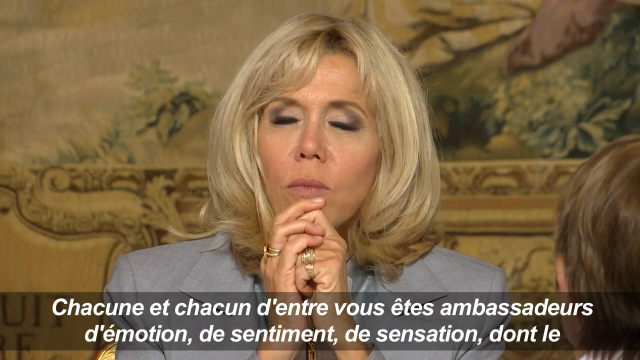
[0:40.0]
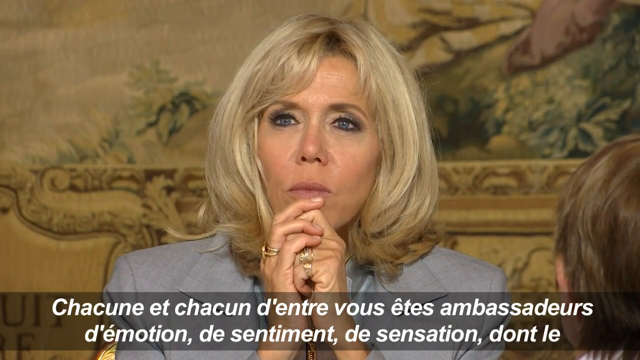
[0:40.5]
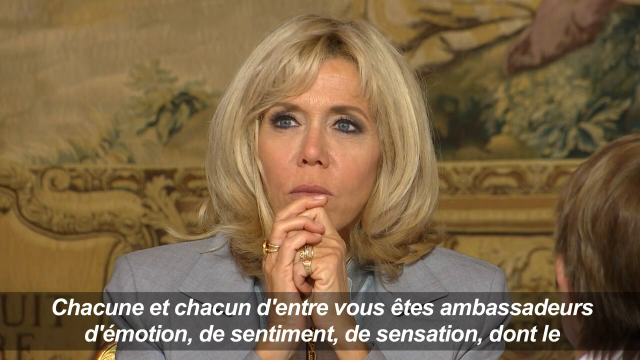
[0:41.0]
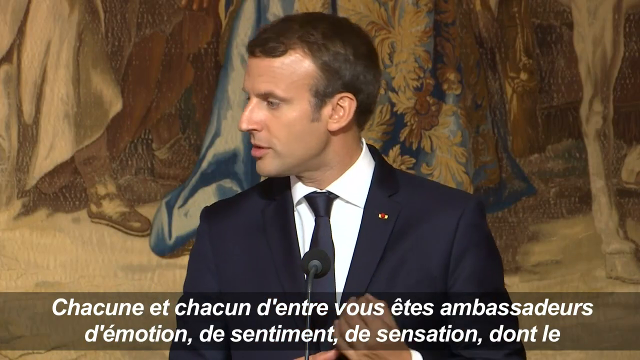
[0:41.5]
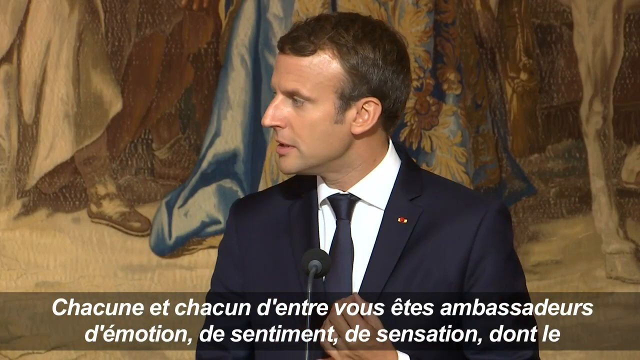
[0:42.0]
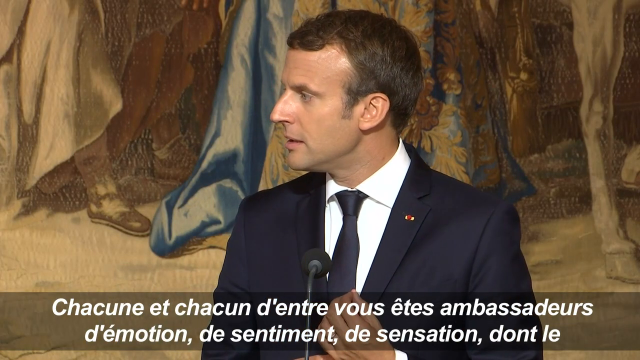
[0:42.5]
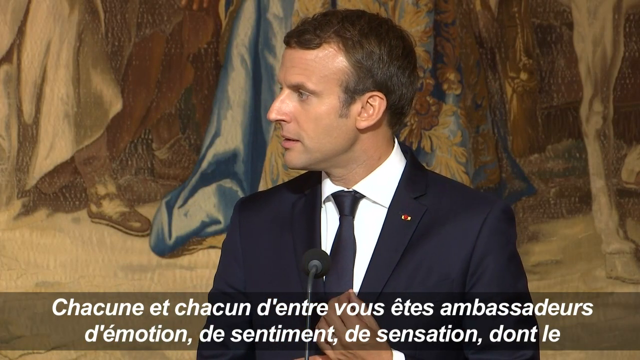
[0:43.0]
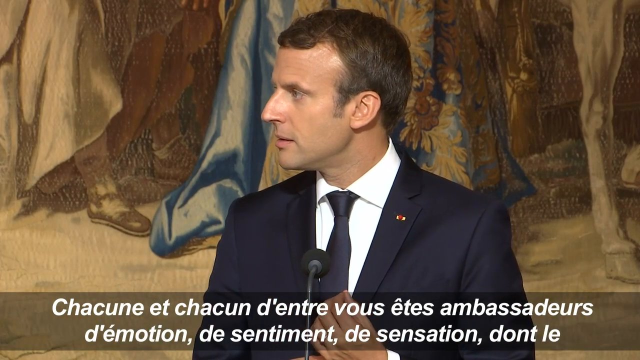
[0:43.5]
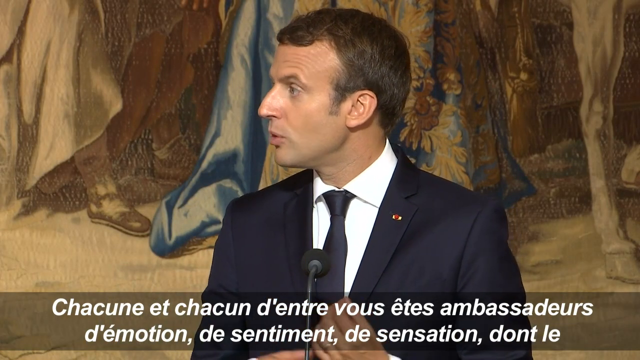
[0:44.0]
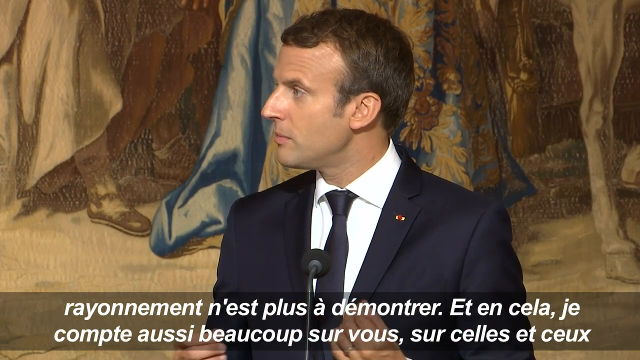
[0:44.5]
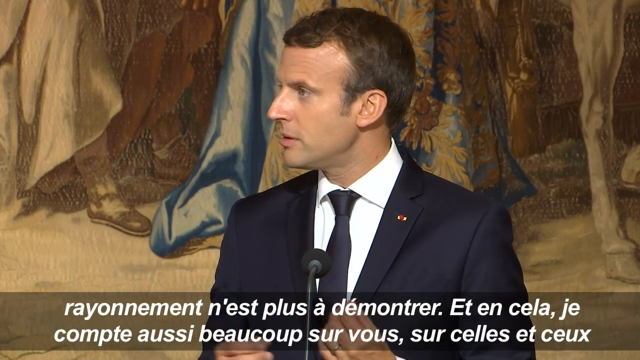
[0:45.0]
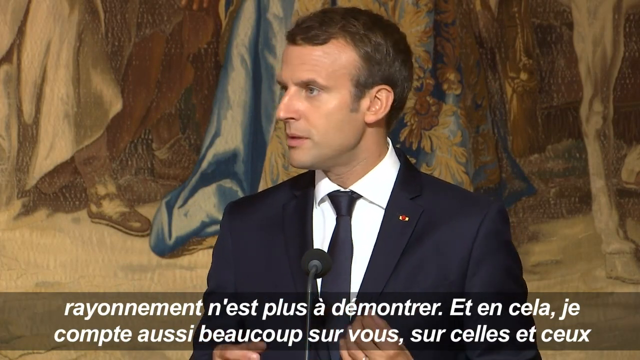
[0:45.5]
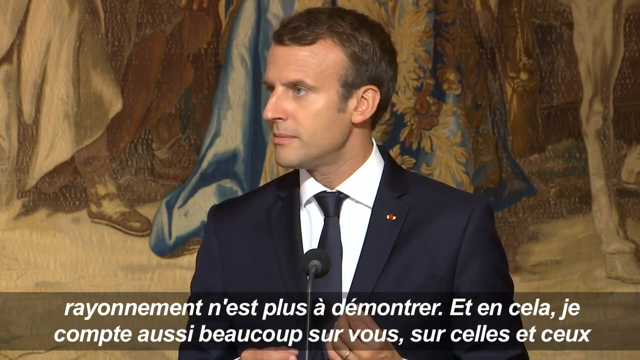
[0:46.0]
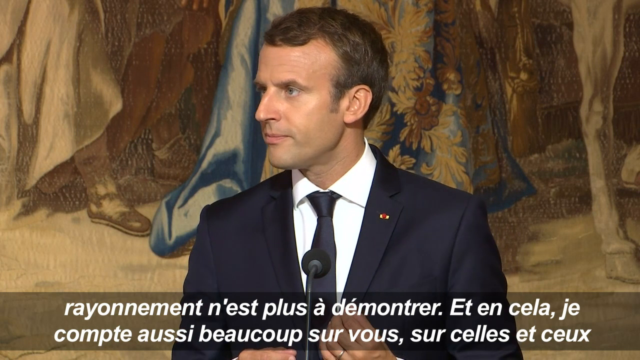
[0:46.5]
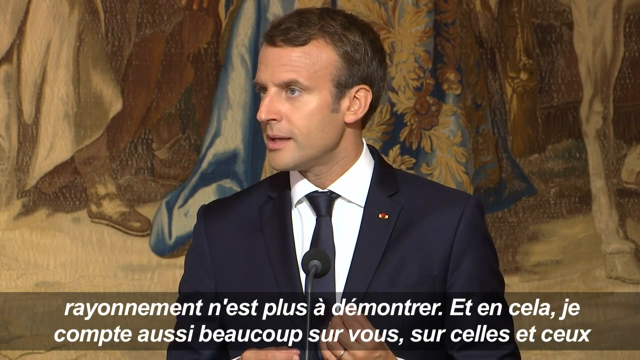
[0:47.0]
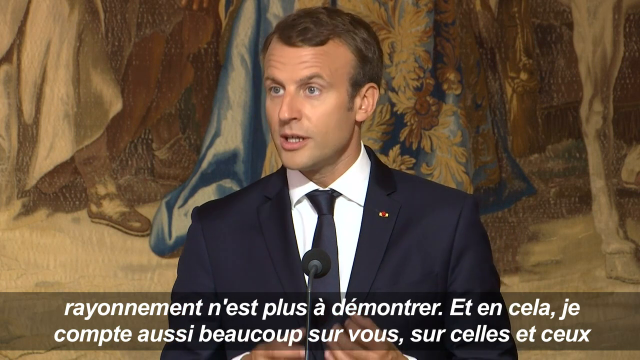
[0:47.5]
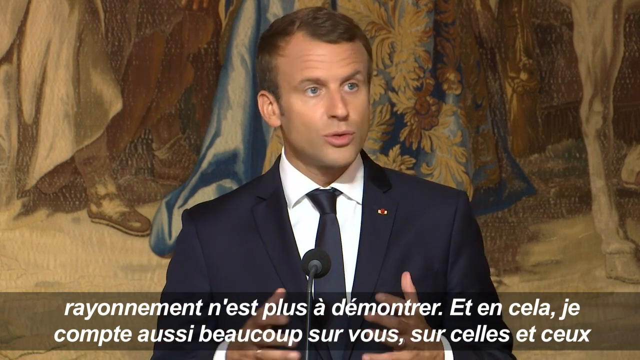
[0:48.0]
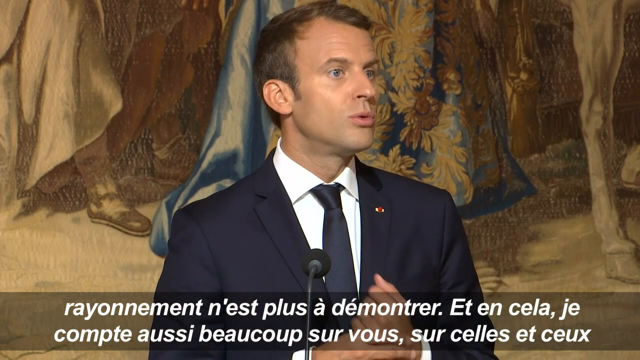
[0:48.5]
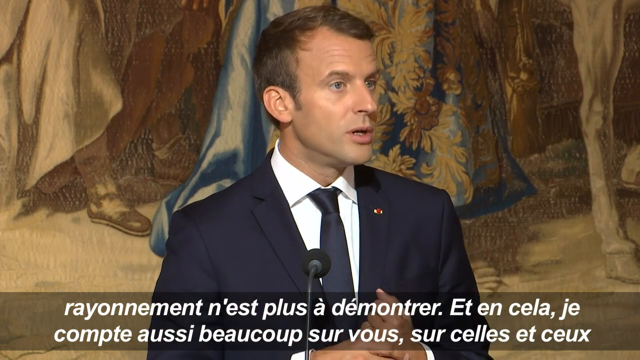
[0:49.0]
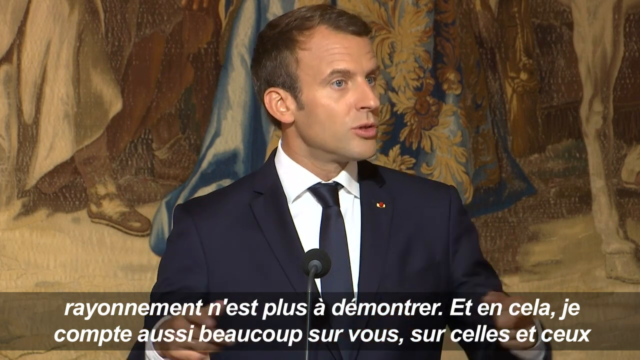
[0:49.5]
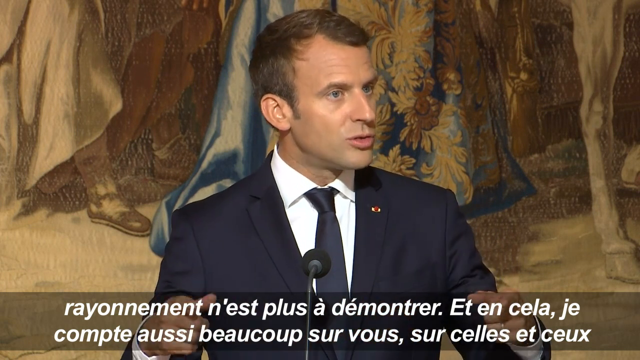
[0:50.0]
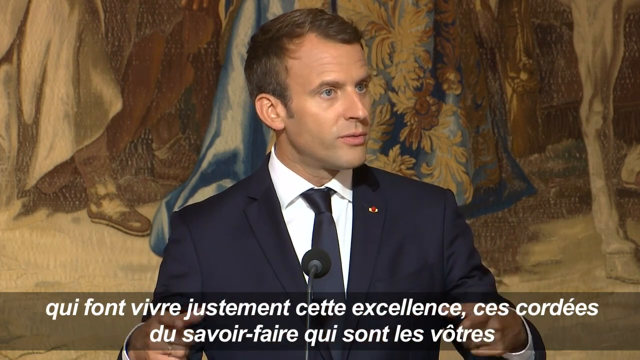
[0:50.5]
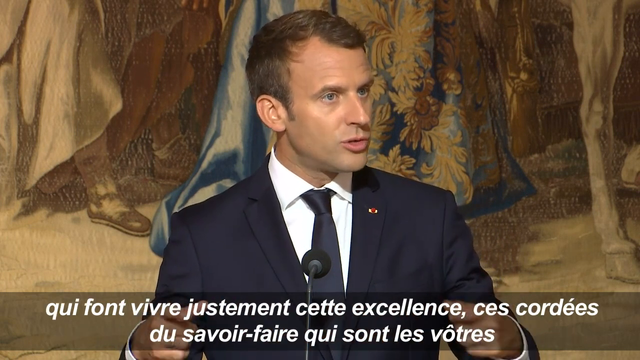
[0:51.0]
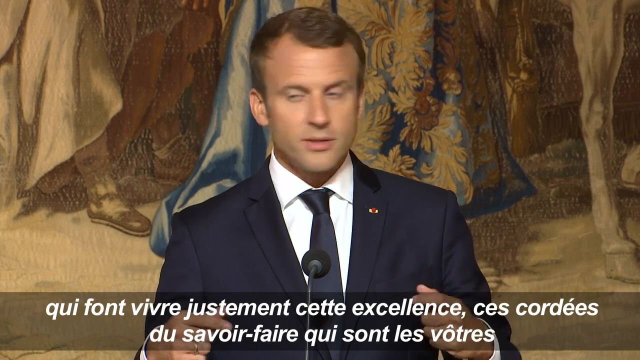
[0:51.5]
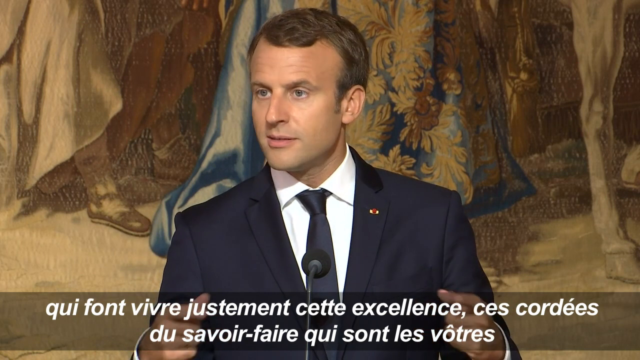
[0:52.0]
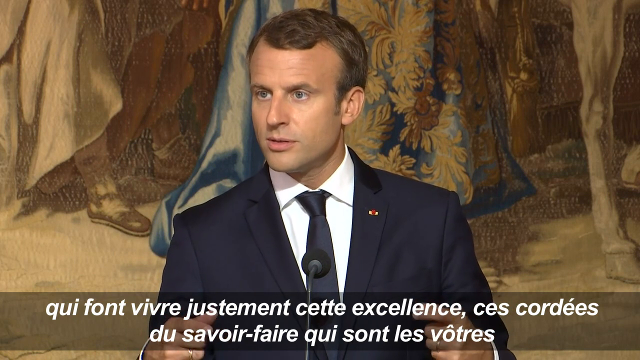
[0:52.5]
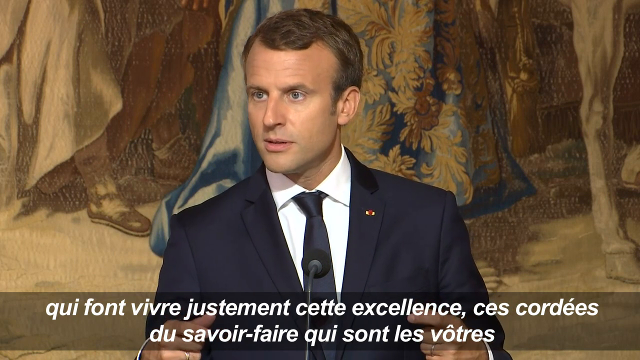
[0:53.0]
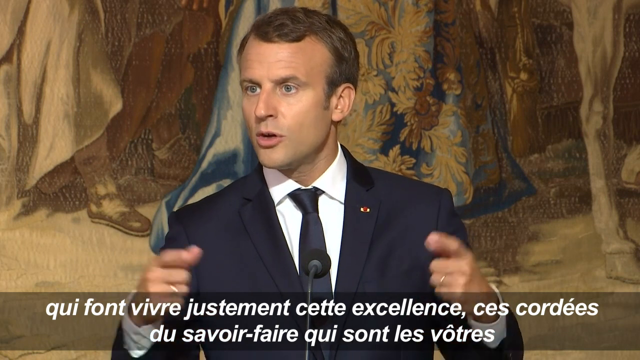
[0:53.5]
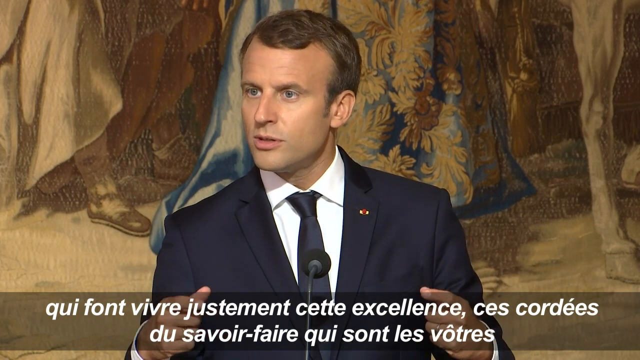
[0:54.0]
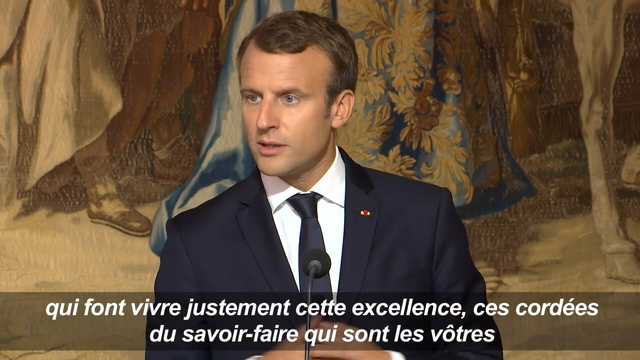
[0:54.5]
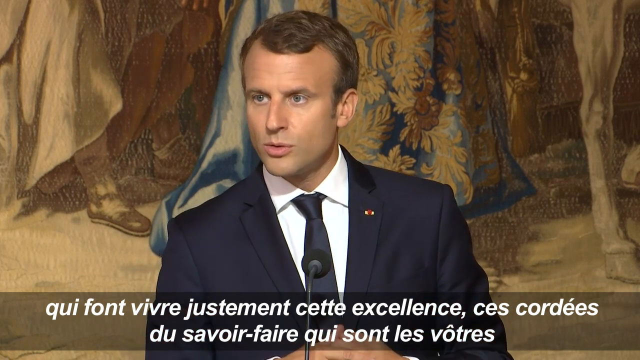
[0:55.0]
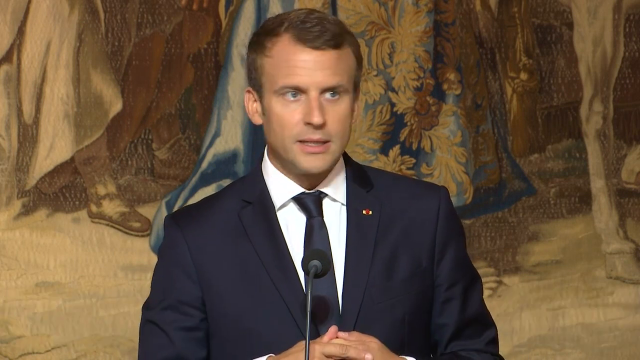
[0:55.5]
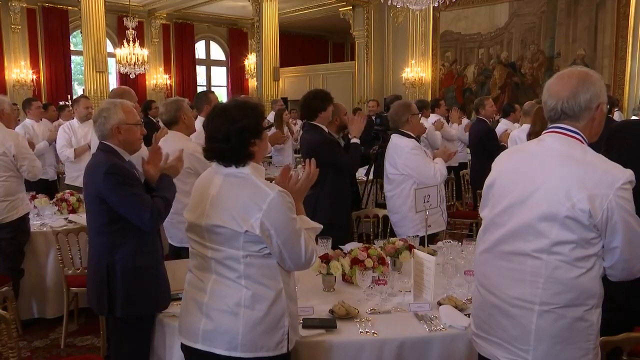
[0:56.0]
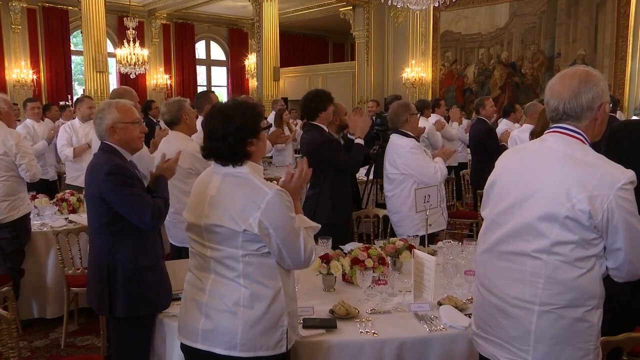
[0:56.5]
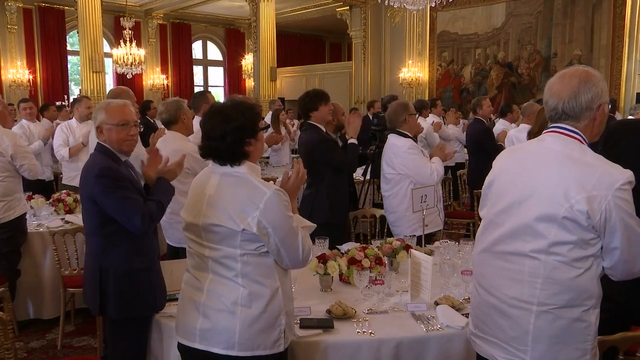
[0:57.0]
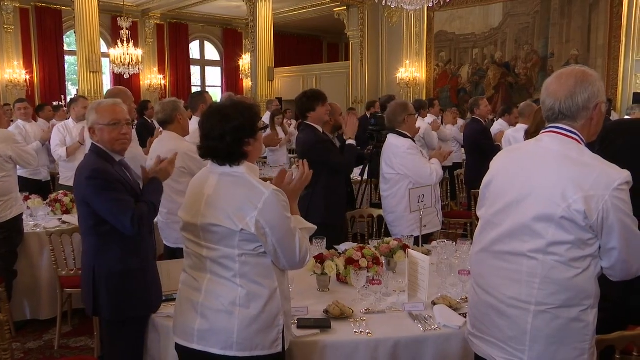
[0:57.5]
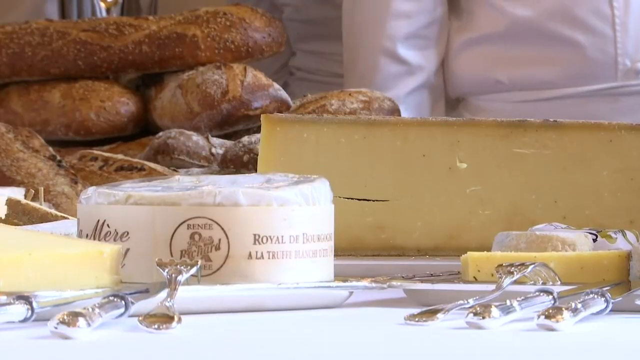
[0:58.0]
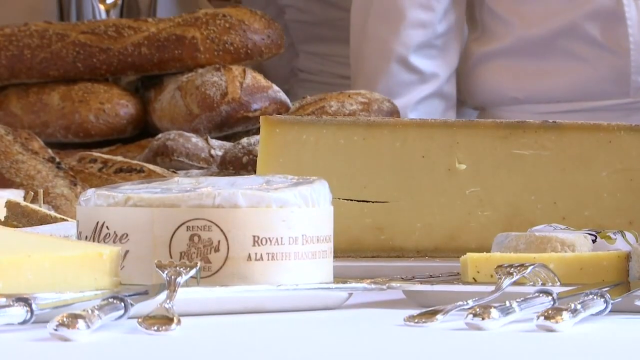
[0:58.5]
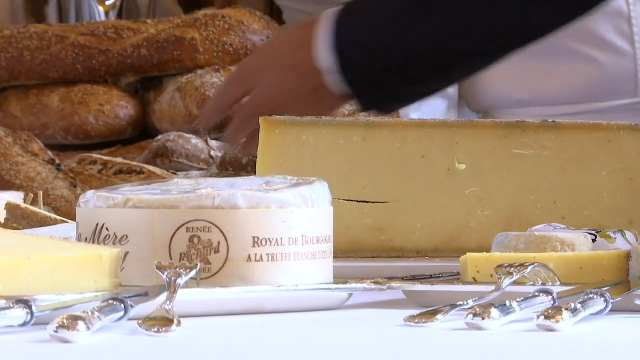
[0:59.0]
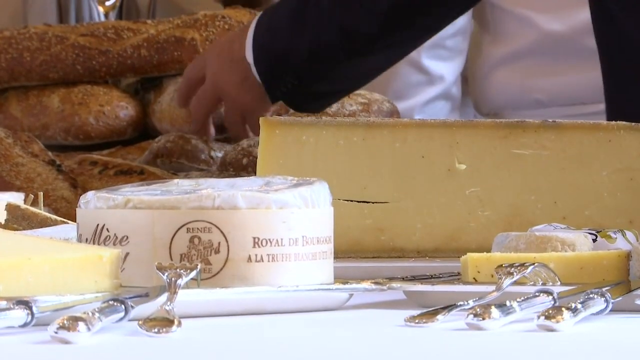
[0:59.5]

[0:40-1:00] A man speaks at a podium while a blonde-haired woman in a gray dress suit listens with her hands to her chin. She has blue eyes and a serious look on her face. The man wears a dark suit, a white shirt and a dark tie, and he is talking in front of some kind of painting with a horse. The closed captioning is in French. Then all of the people, seated at tables, clap and stand. Cheese and rolls or baguettes are visible.